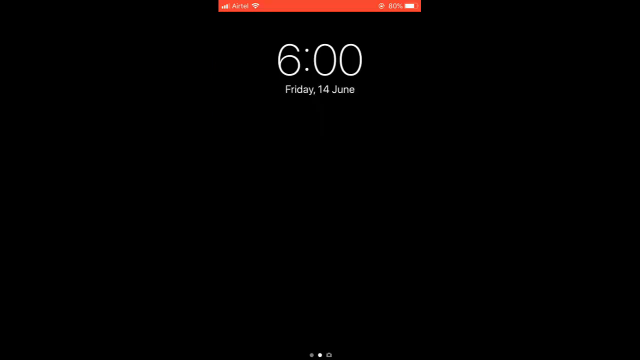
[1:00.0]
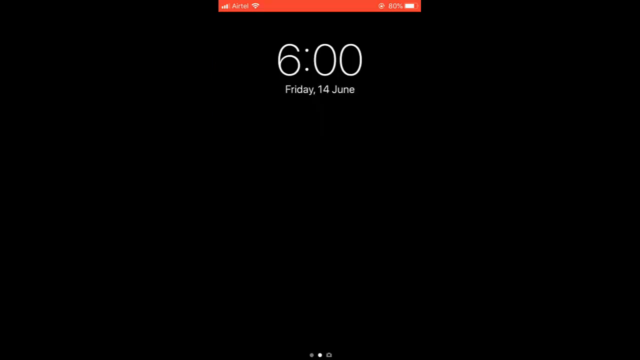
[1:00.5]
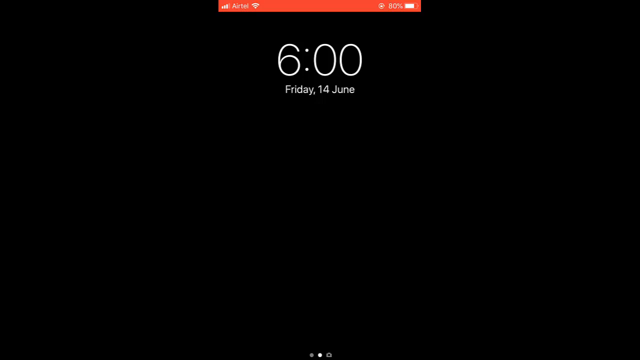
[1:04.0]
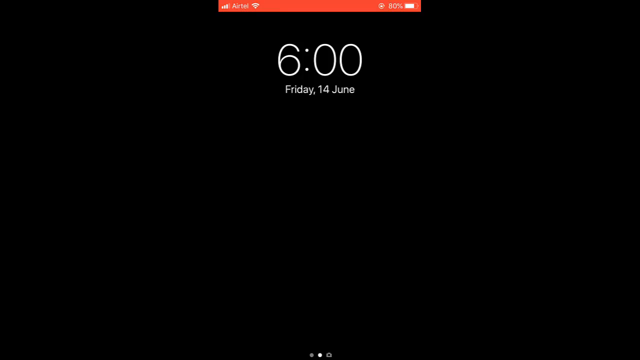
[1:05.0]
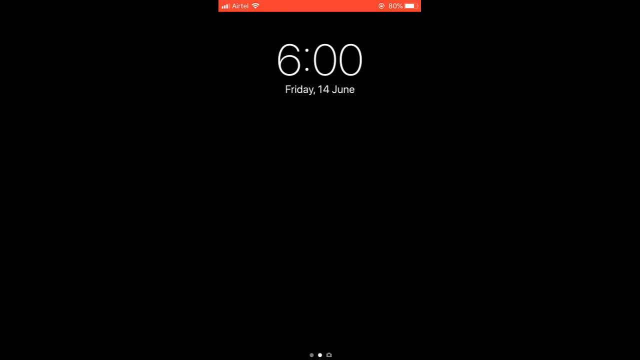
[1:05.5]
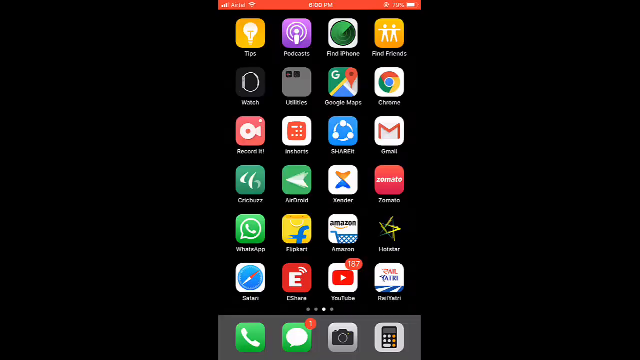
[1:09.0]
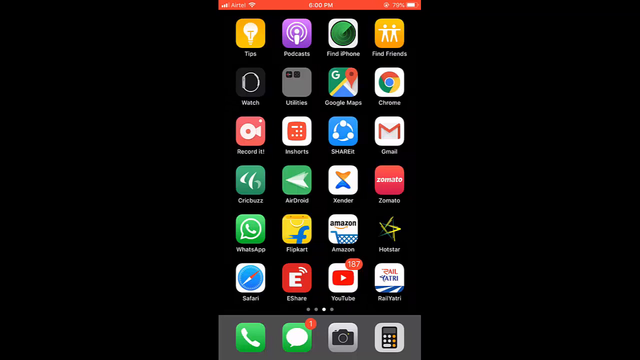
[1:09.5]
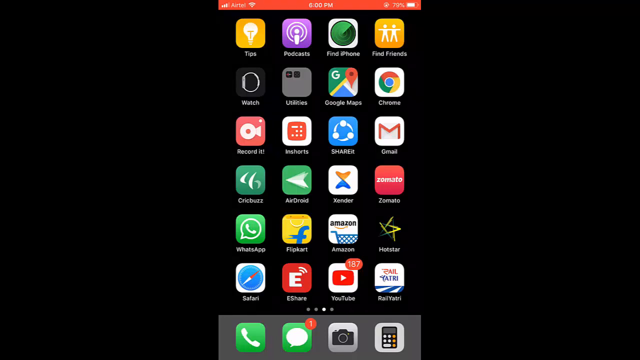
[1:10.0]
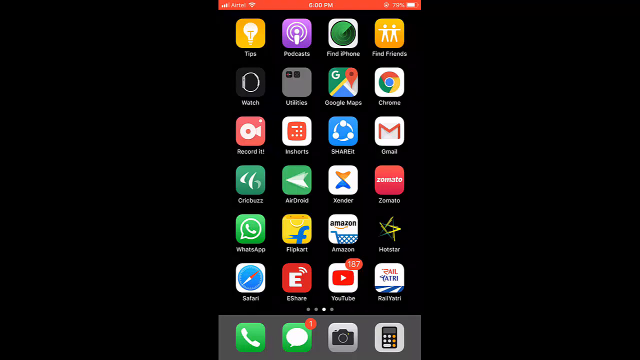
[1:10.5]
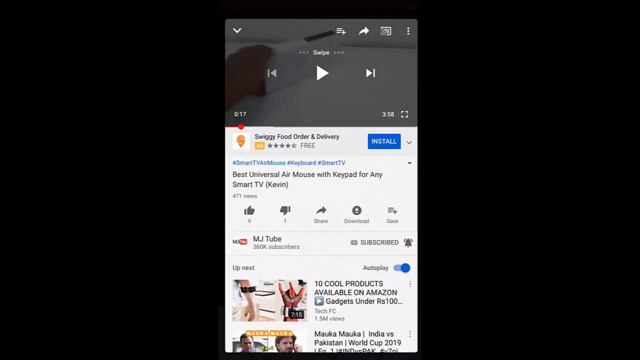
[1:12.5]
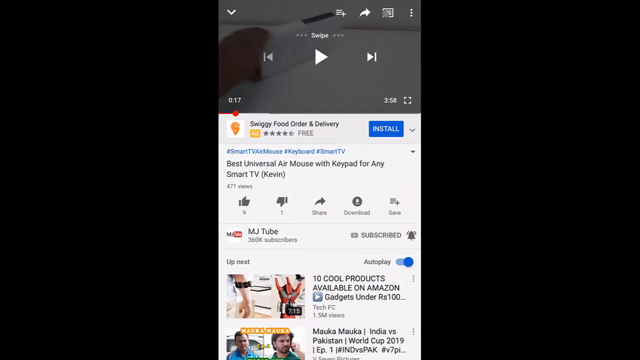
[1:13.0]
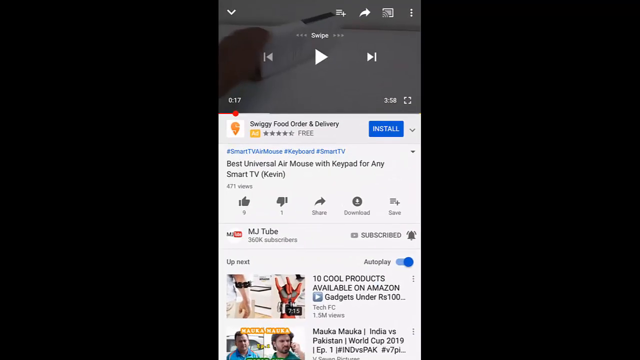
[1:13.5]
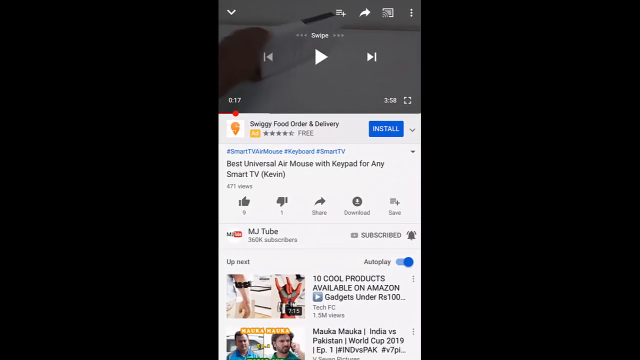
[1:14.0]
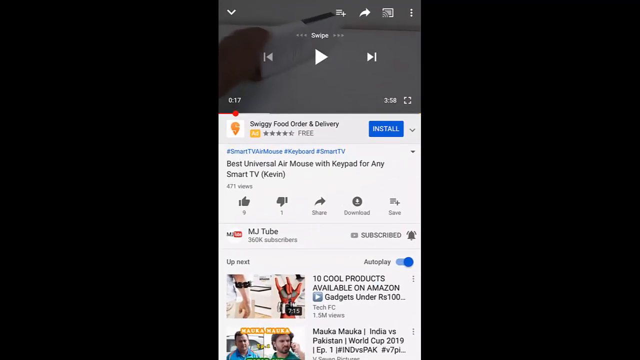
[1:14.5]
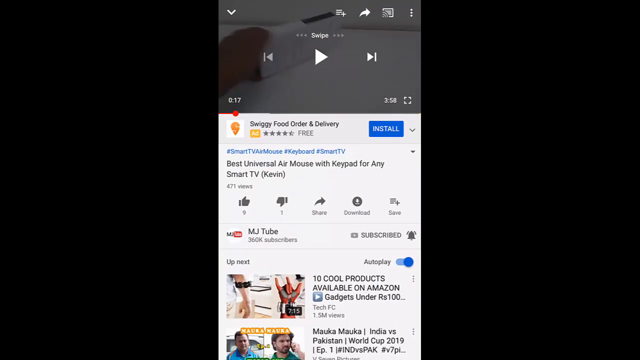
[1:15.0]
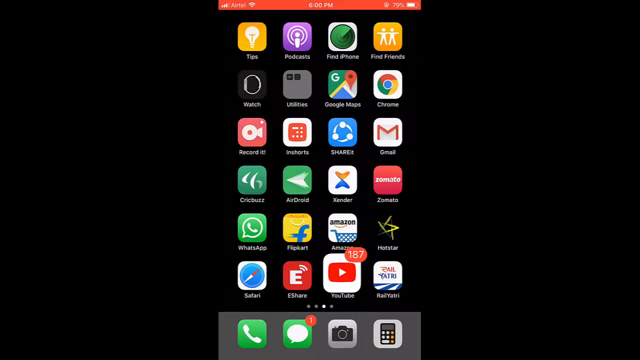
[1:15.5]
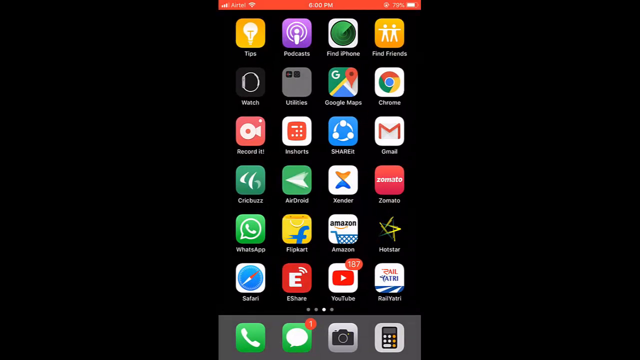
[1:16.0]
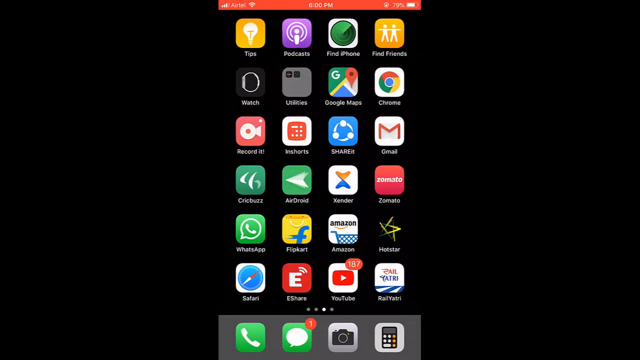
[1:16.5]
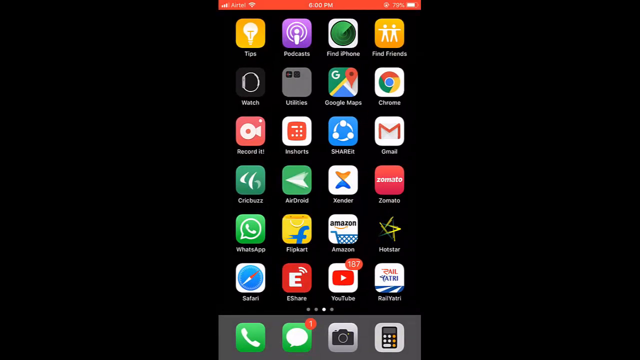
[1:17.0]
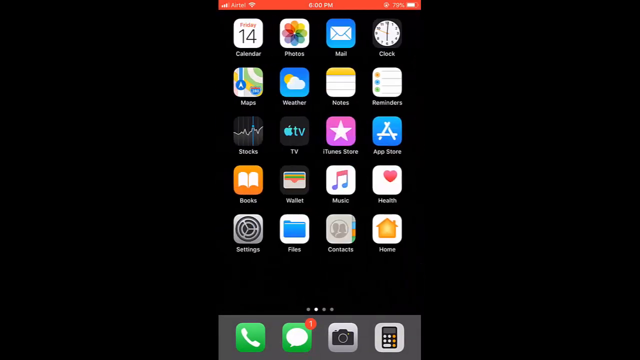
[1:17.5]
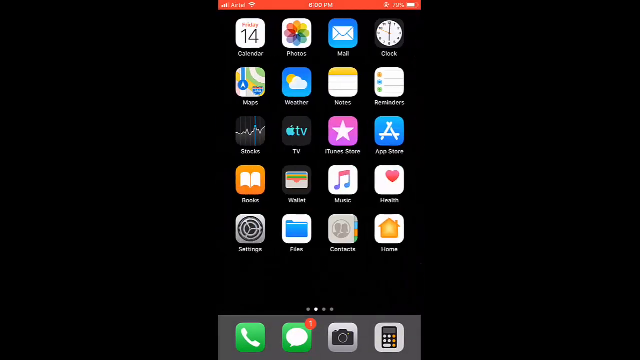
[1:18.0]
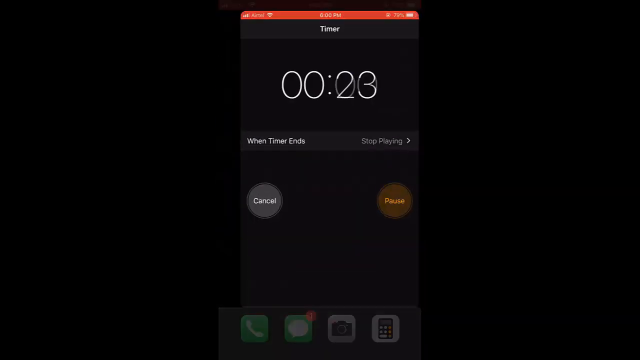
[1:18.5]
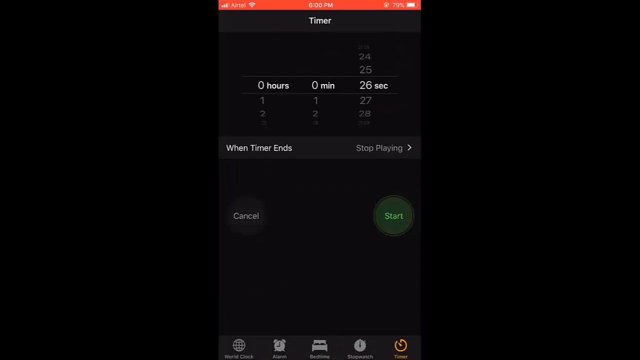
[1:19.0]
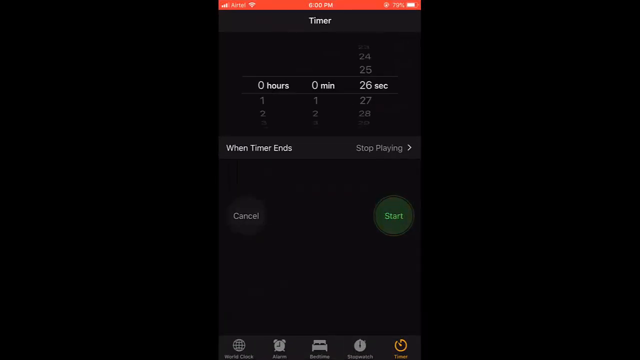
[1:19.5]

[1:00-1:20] The screen is black, showing the time 6:00 with the date underneath reading Friday, 14 June. In the top right, the phone shows 80% charge left. In the top left, the signal strength is at three bars, it says Airtel, and the Wi-Fi symbol is shown. The app screen is once again shown, with many apps and their colorful logos. The user is on the third page of apps and clicks the YouTube app once again, going back to the "Best universal air mouse with keypad for any smart TV (Kevin)" video. The user exits the YouTube app once again, navigates back to page two of the apps, and clicks the clock app once again, and the timer opens.